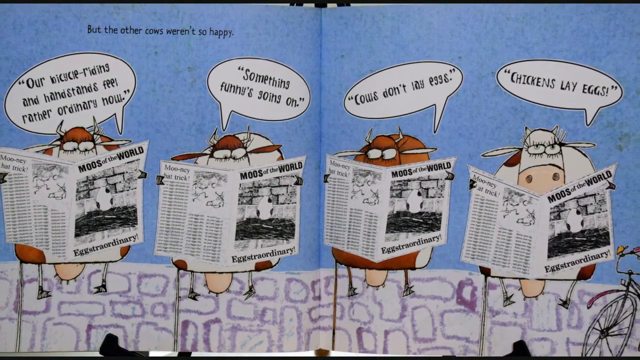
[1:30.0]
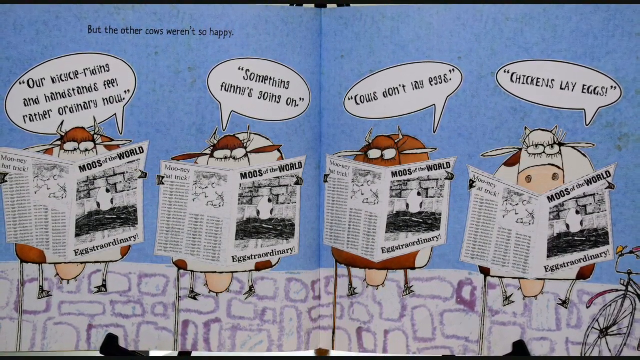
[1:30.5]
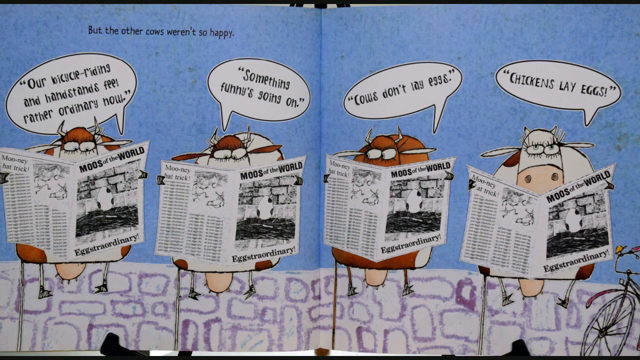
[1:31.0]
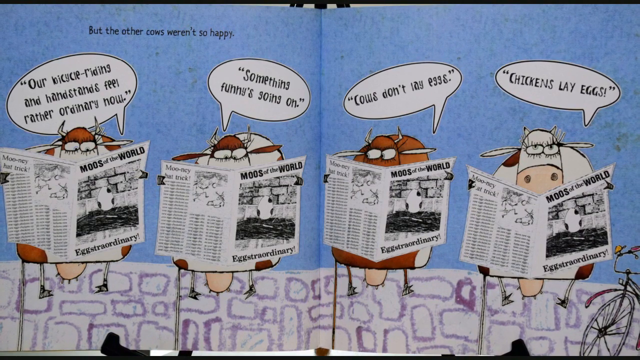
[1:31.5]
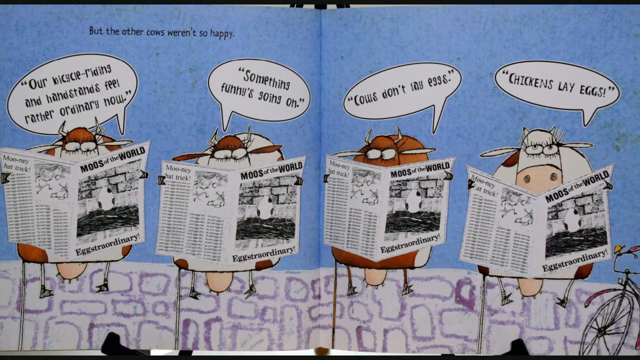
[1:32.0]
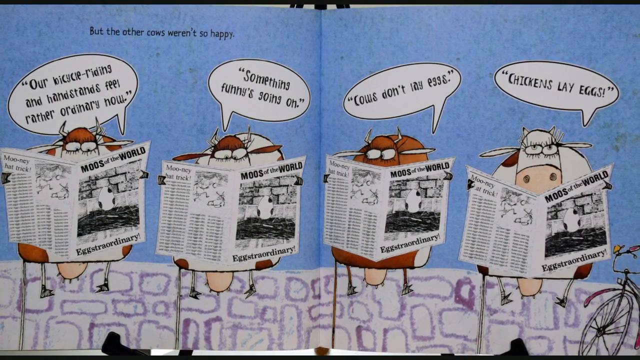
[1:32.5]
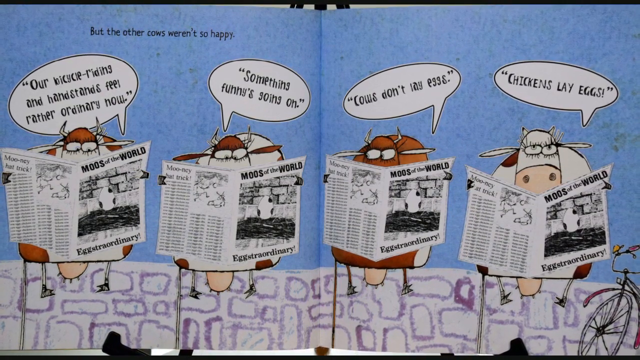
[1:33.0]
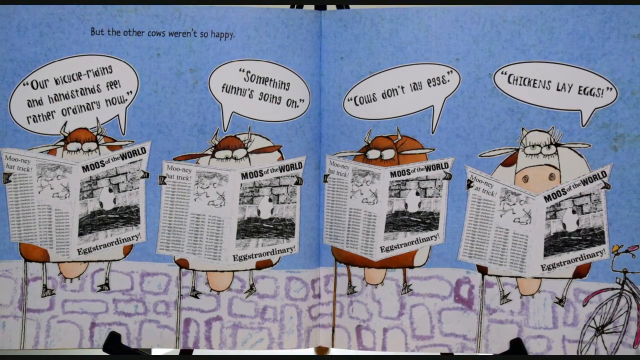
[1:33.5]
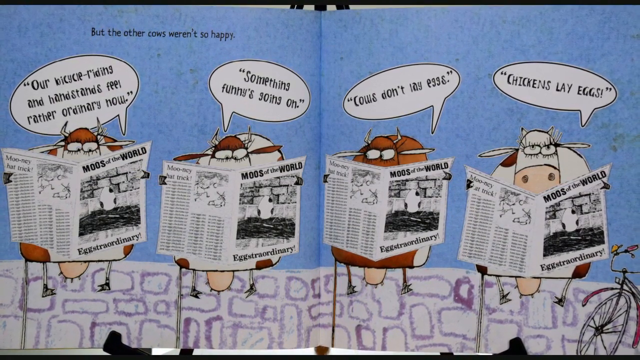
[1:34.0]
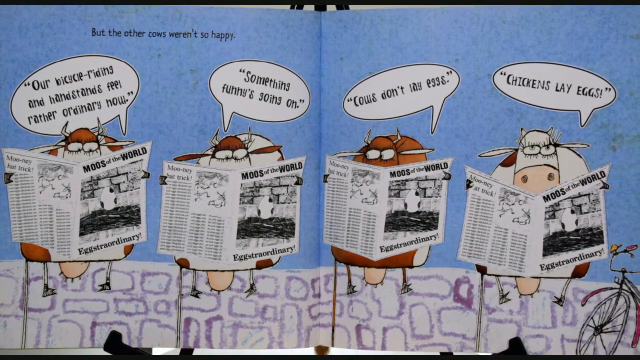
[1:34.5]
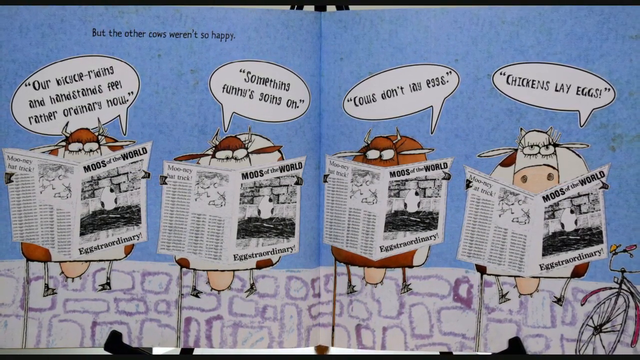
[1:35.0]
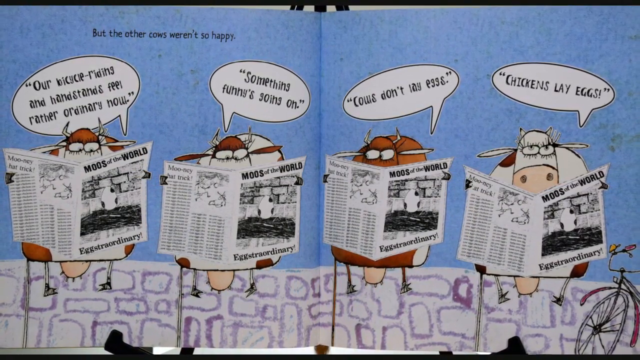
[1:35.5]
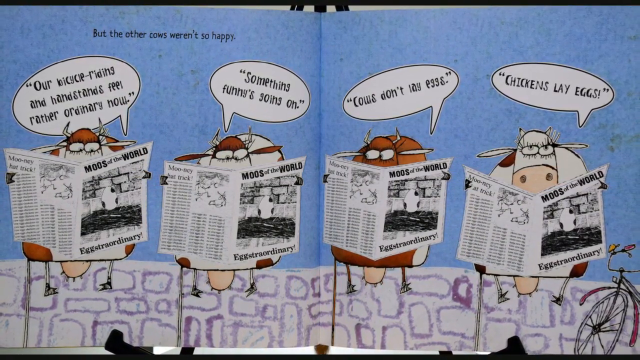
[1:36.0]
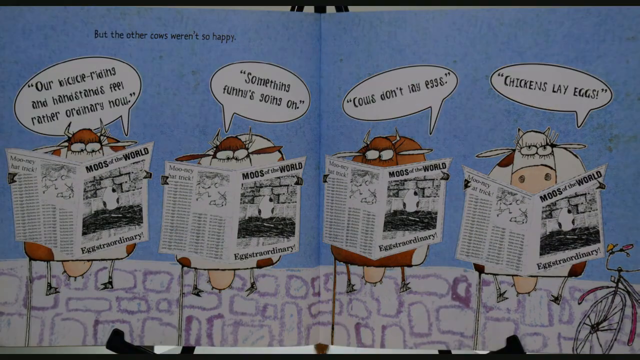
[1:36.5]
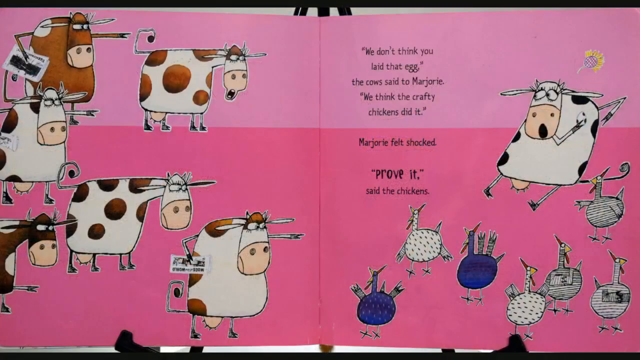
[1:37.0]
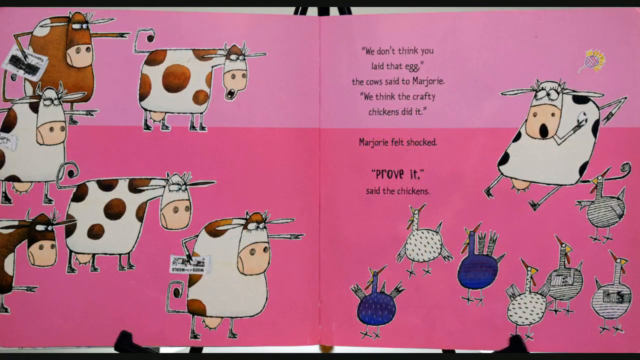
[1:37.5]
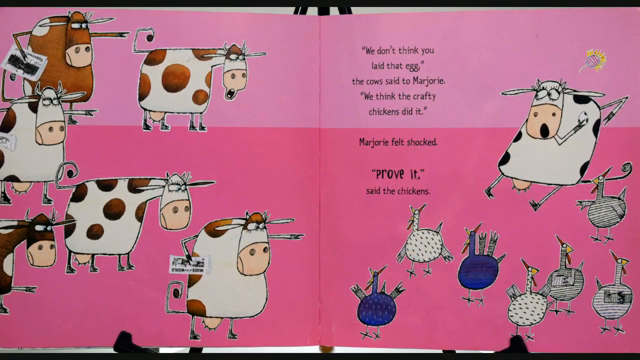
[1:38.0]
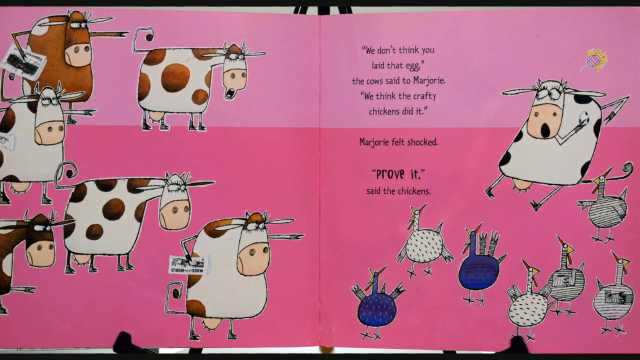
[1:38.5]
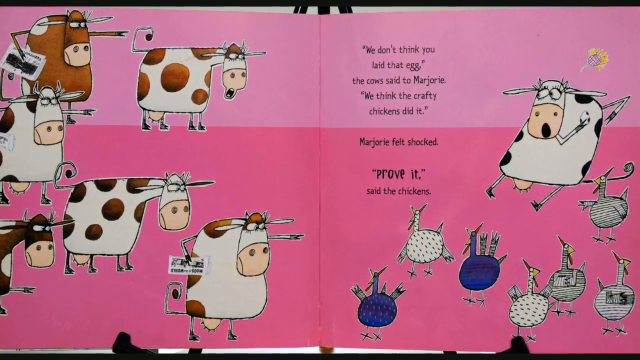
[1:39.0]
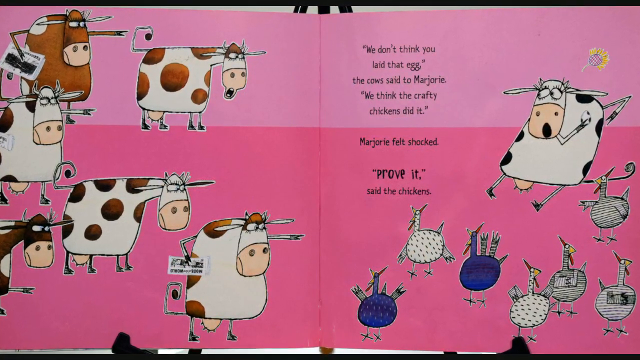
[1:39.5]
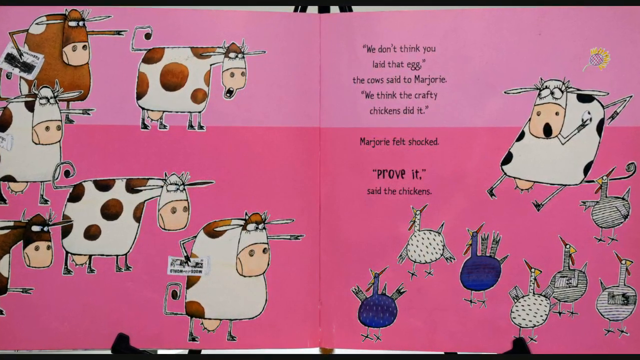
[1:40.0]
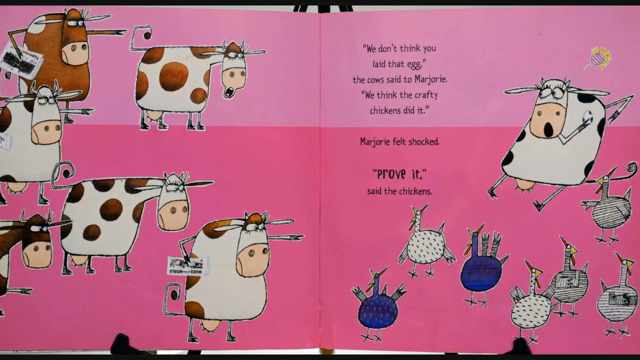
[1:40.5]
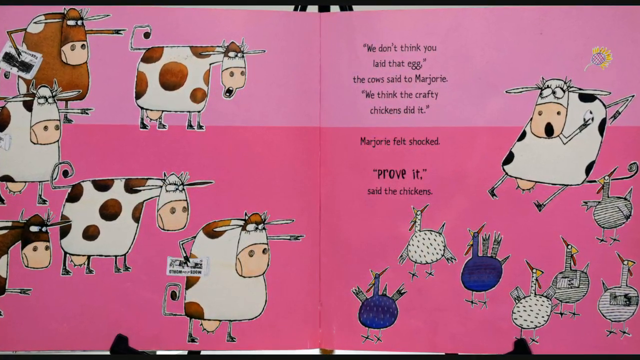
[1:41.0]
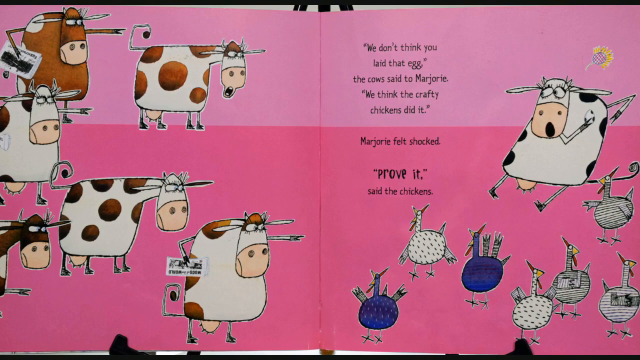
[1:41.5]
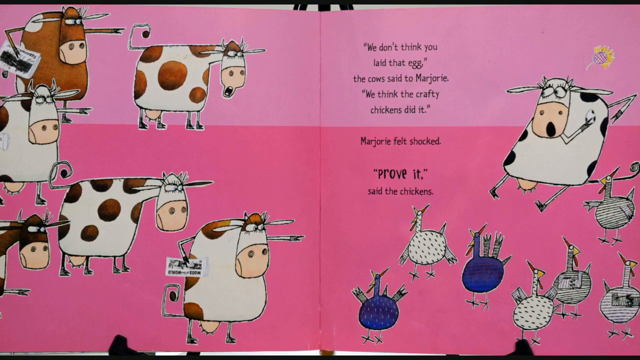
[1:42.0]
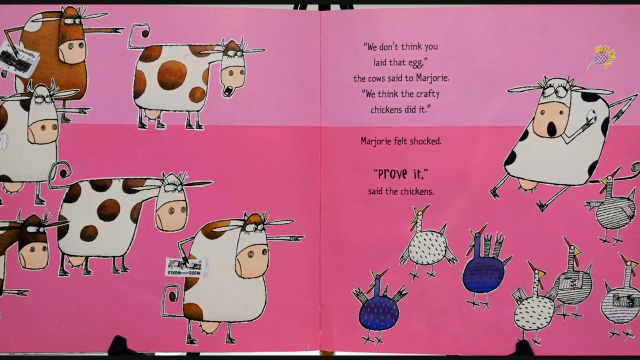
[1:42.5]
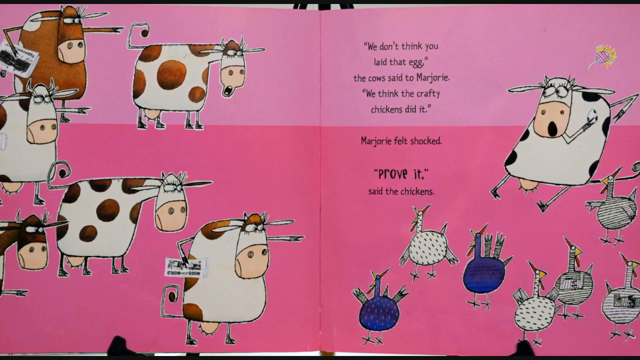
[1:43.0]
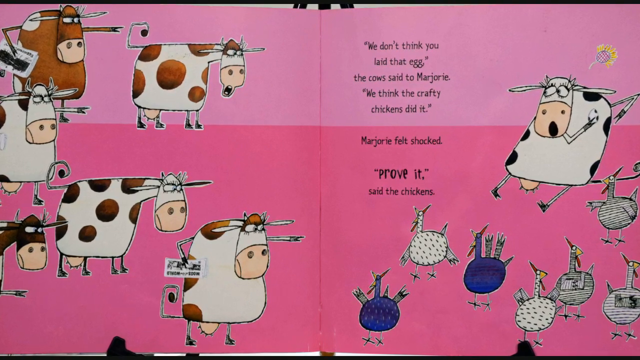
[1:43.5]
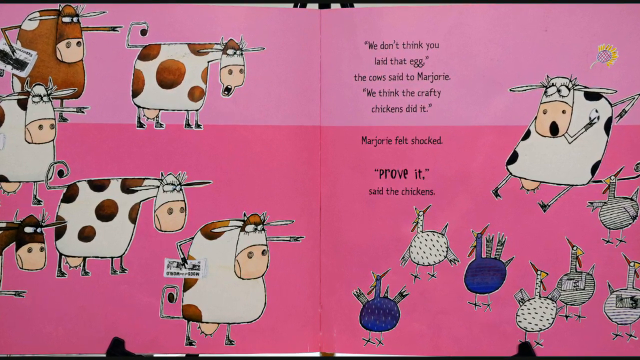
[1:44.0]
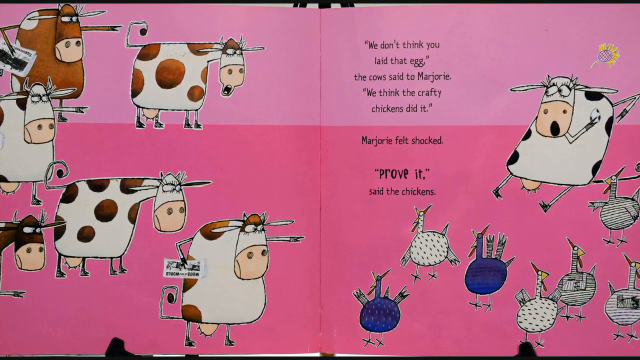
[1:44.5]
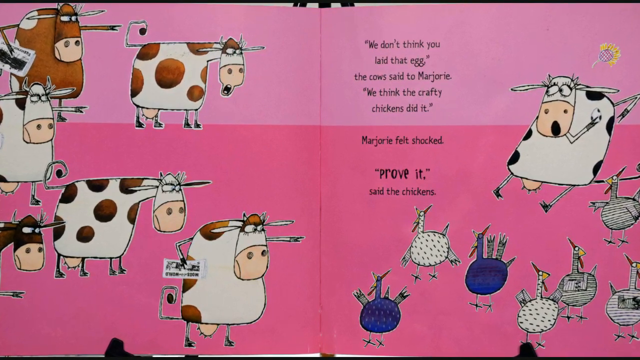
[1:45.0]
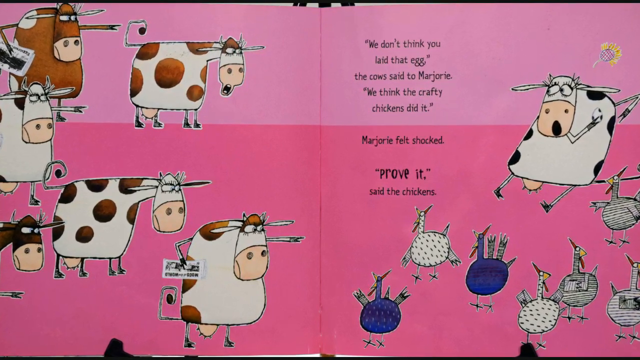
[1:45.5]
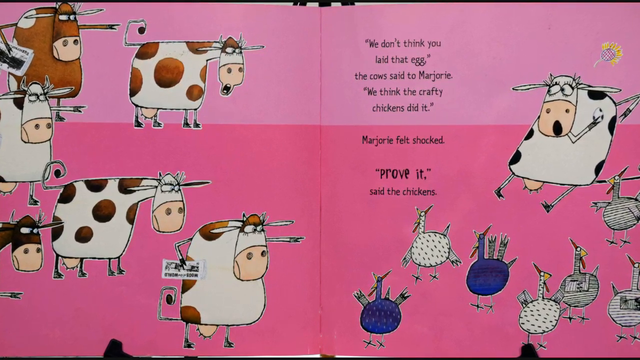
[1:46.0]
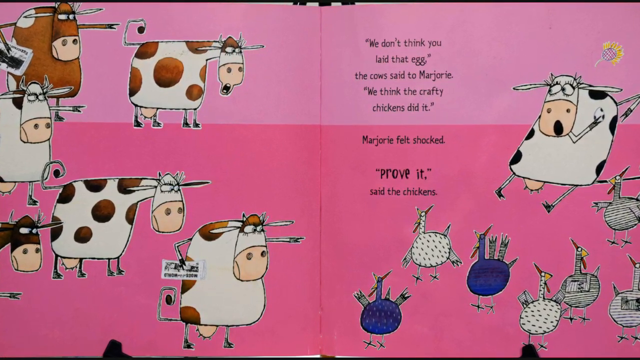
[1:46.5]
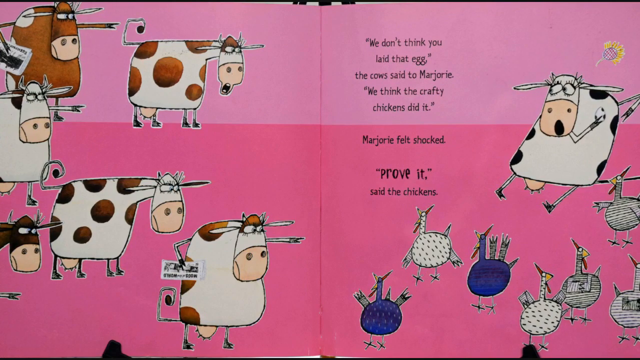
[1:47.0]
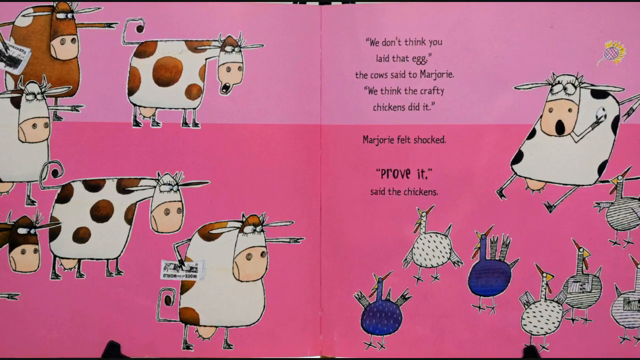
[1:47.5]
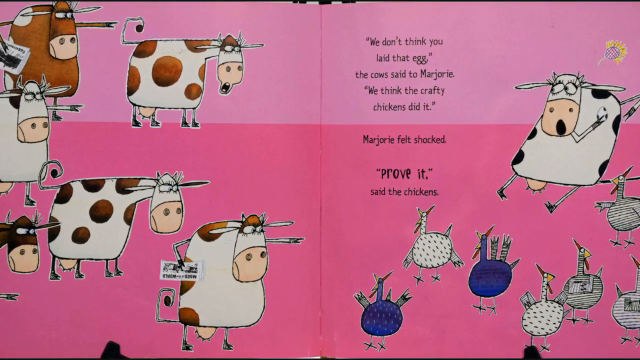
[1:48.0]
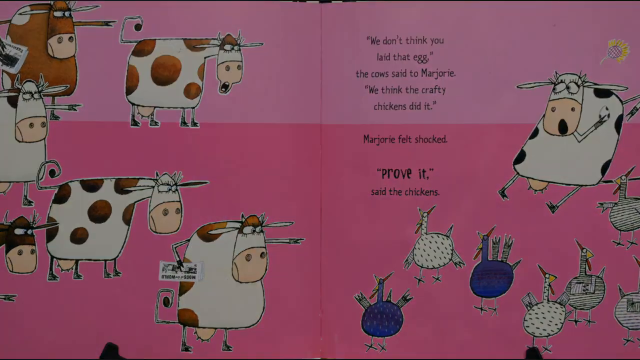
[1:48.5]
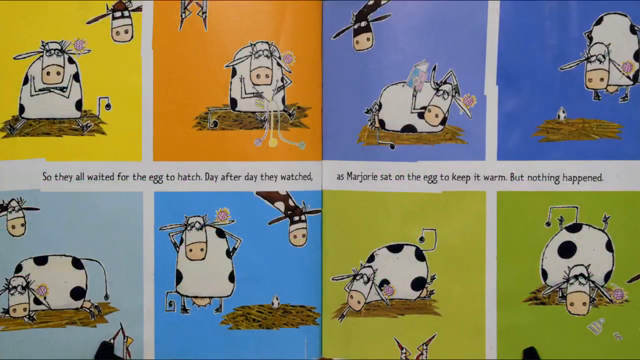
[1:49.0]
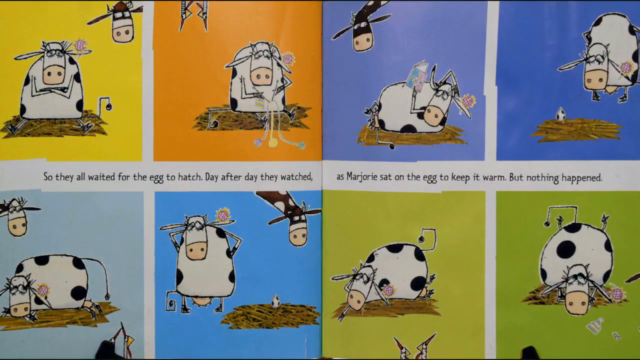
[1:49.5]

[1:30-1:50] The cows are sitting around, having figured out that they have been tricked, since cows don't lay eggs and chickens do. On the next page the background is off-pink, and the cows are all pointing at Marjorie, who looks a little upset and shocked and is holding her egg. The text reads "We don't think you laid that egg," the cows said to Marjorie. "We think the crafty chickens did it." Marjorie felt shocked. "Prove it," said the chickens. The chickens stand on one side with Marjorie, proud of the plan they concocted, while six cows on the other side are very upset and point at Marjorie. The next page shows the cows and the chickens conversing, and then the video cuts forward a little.